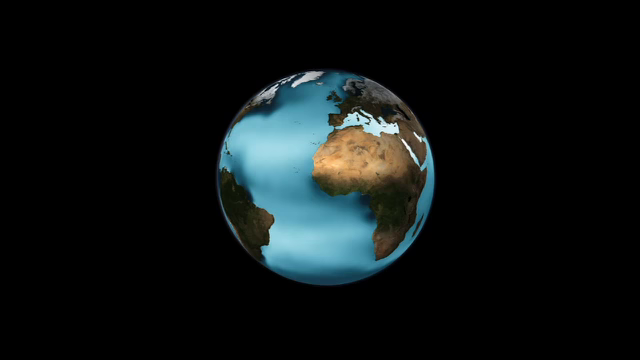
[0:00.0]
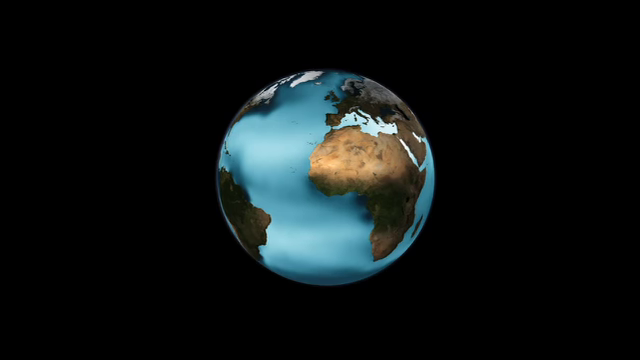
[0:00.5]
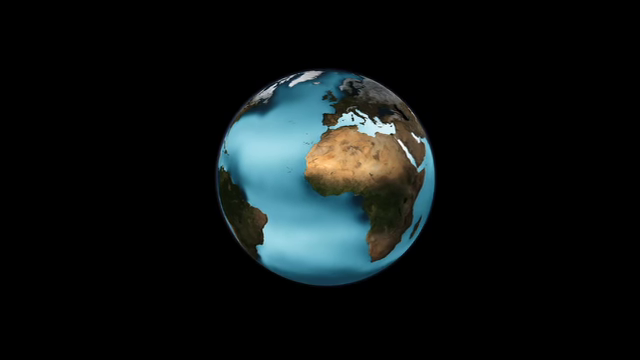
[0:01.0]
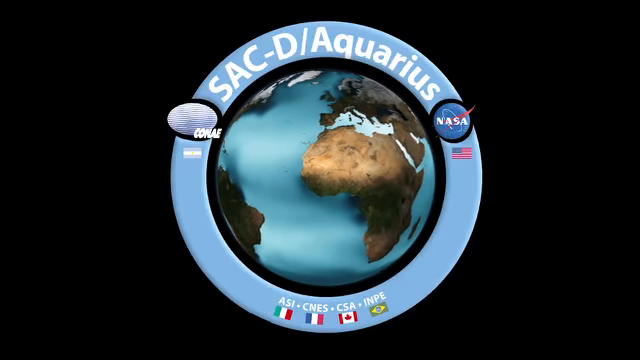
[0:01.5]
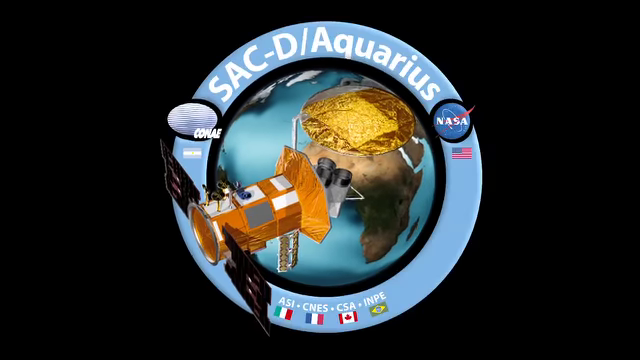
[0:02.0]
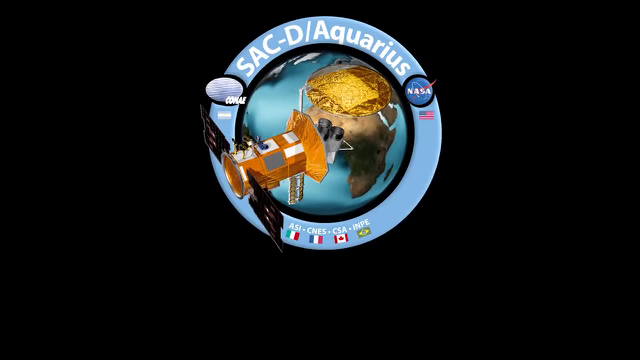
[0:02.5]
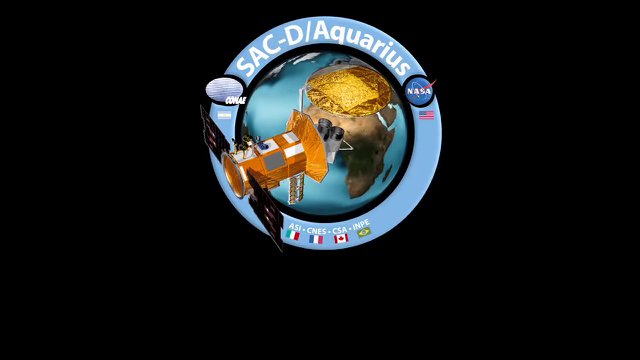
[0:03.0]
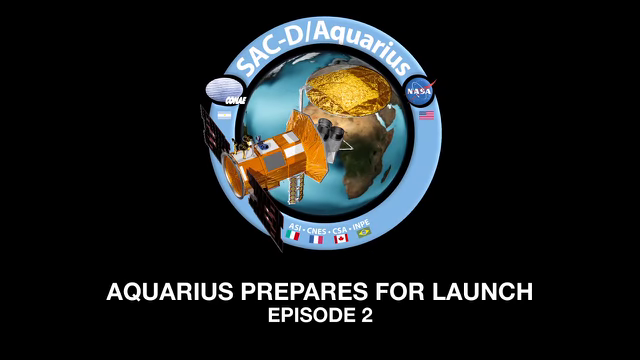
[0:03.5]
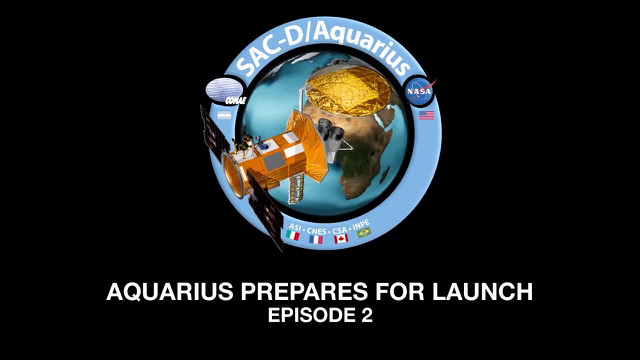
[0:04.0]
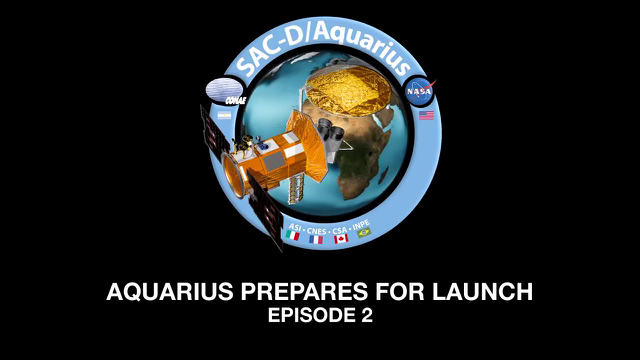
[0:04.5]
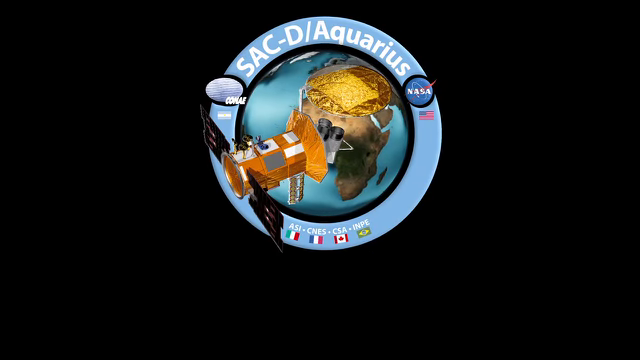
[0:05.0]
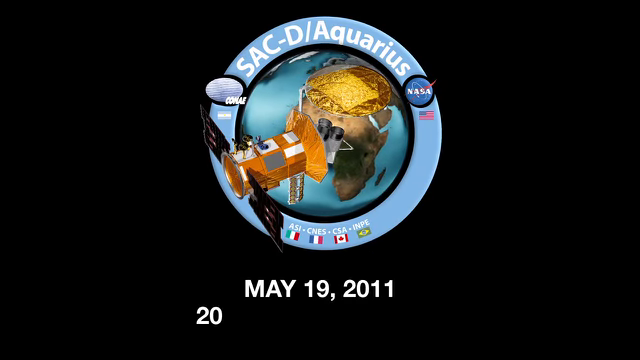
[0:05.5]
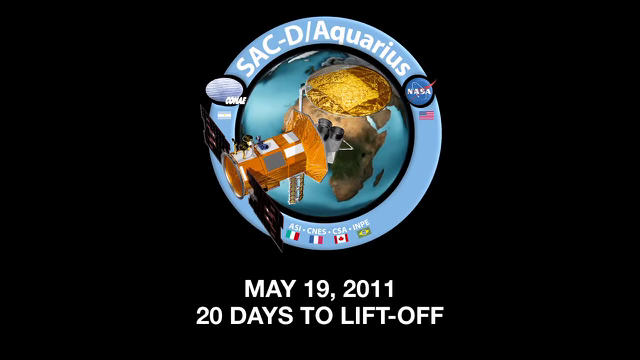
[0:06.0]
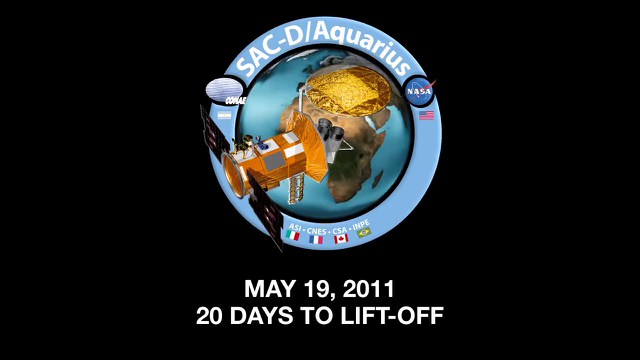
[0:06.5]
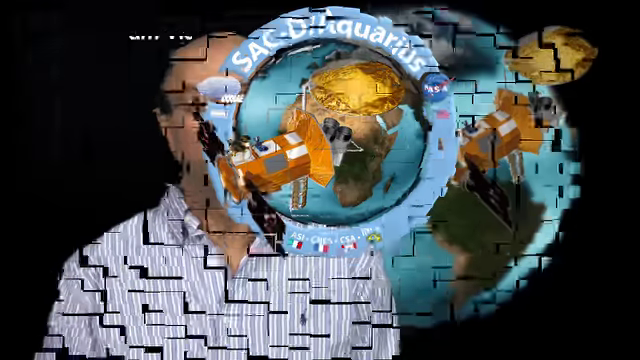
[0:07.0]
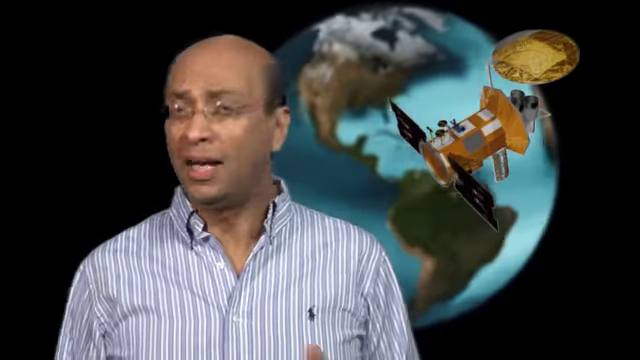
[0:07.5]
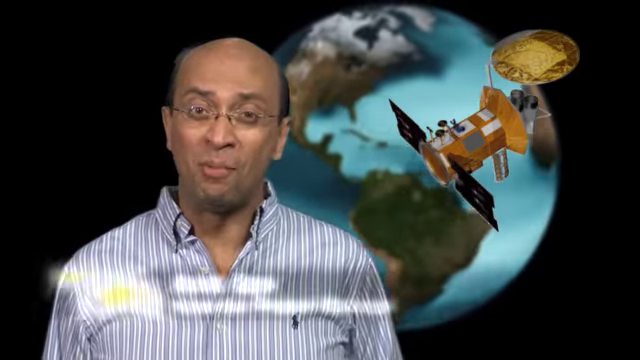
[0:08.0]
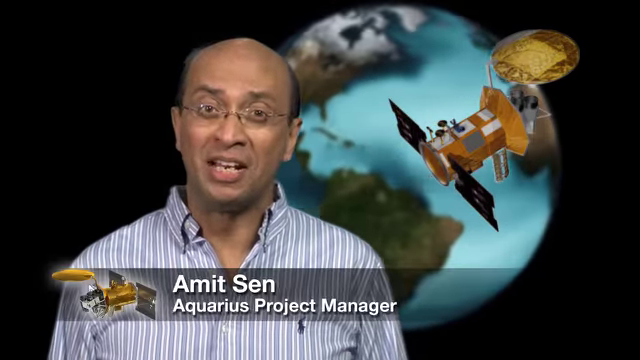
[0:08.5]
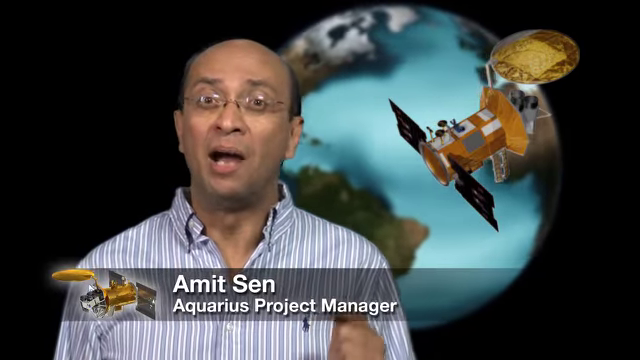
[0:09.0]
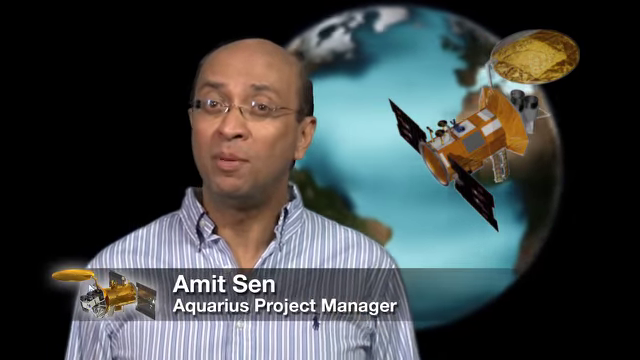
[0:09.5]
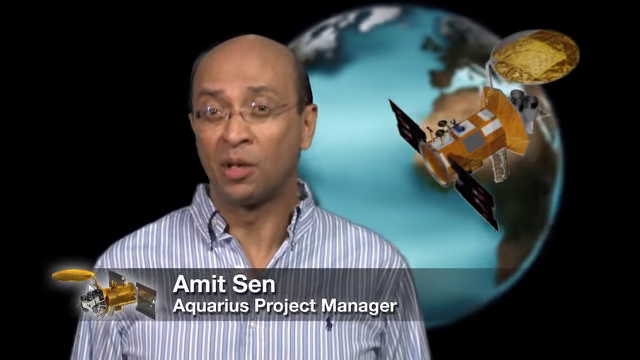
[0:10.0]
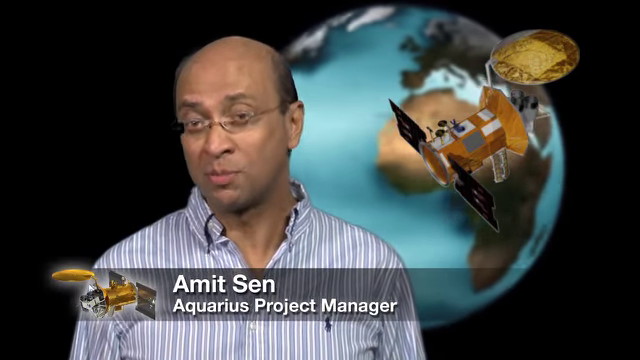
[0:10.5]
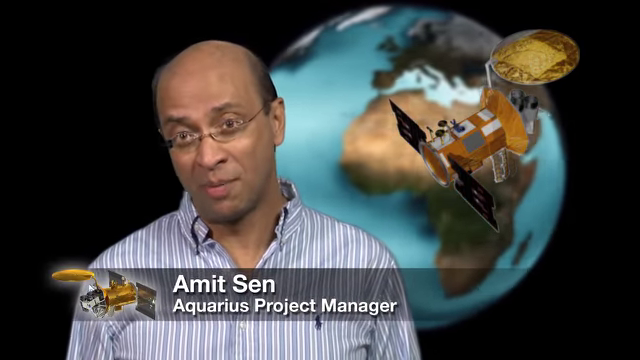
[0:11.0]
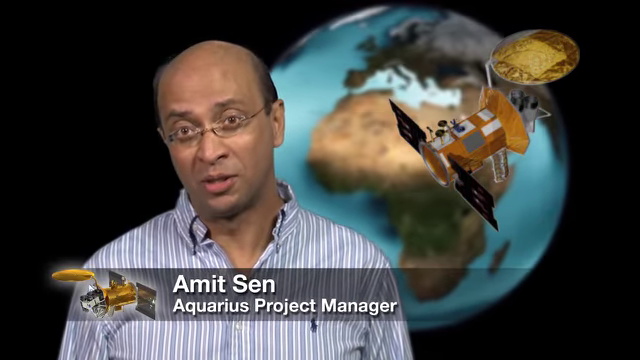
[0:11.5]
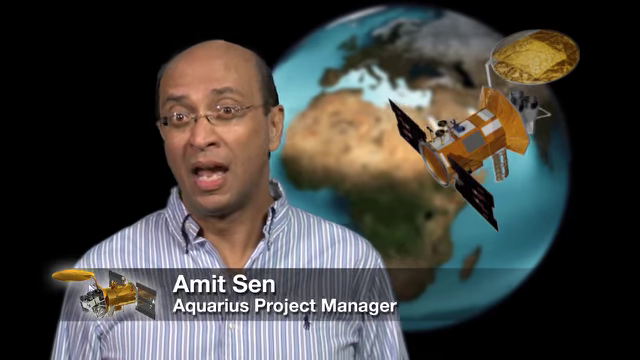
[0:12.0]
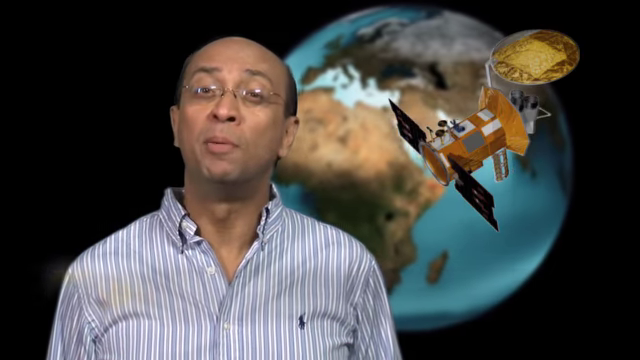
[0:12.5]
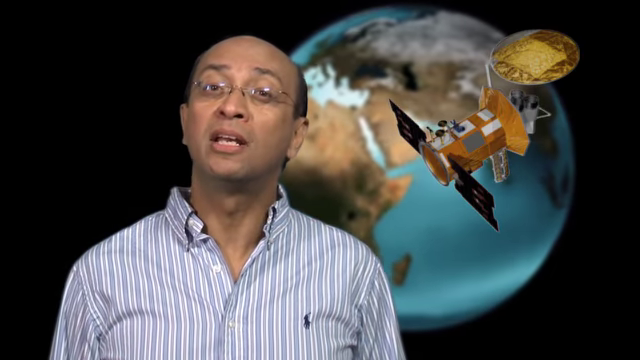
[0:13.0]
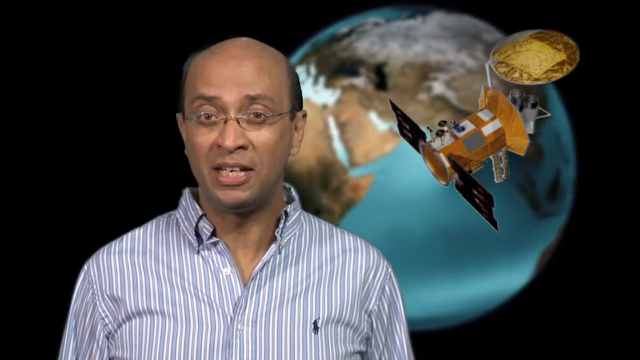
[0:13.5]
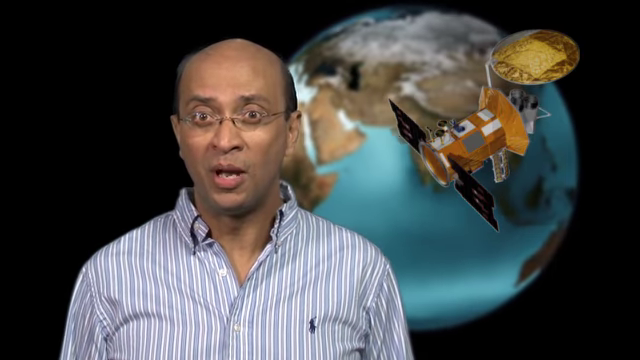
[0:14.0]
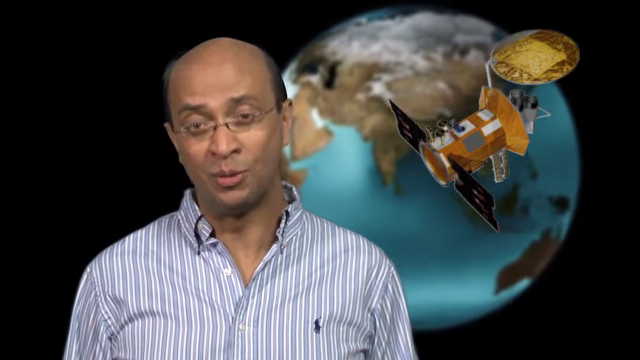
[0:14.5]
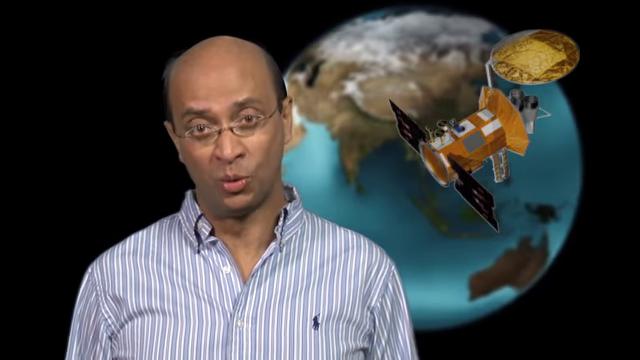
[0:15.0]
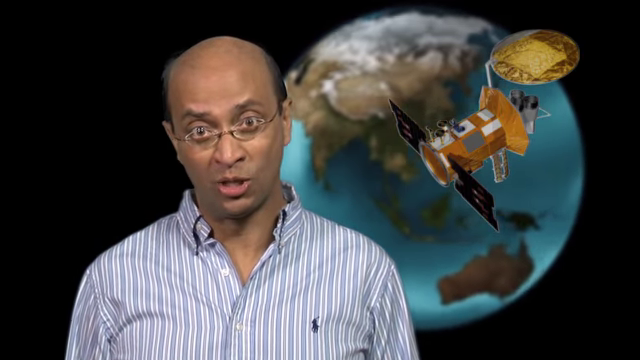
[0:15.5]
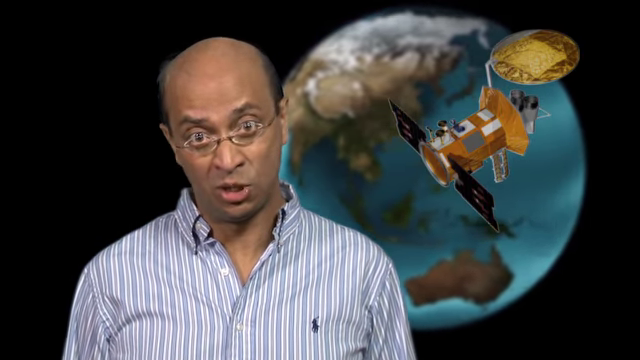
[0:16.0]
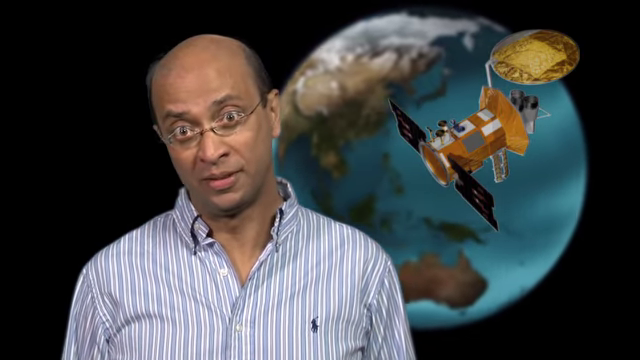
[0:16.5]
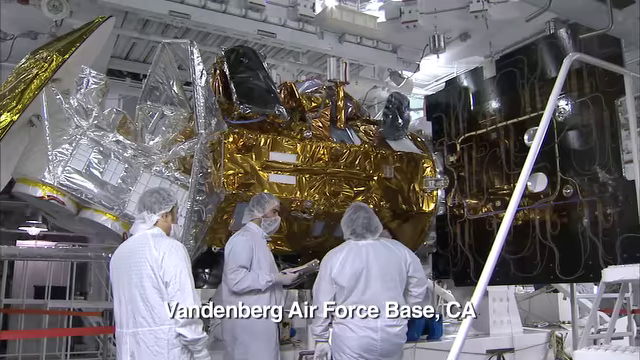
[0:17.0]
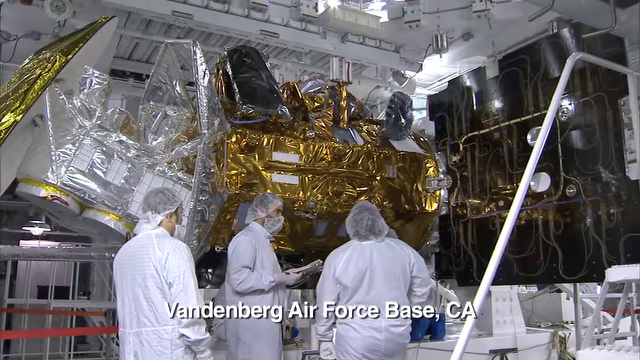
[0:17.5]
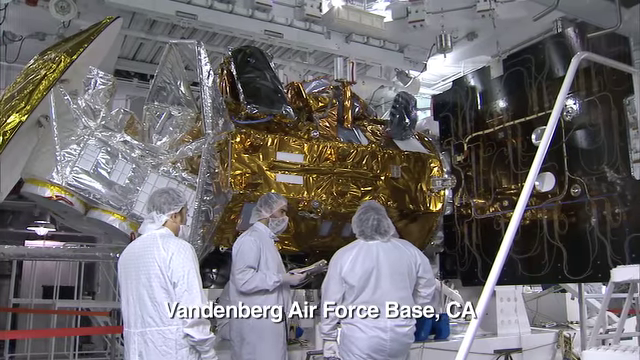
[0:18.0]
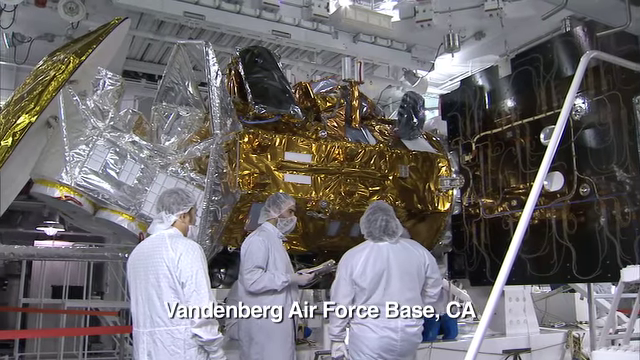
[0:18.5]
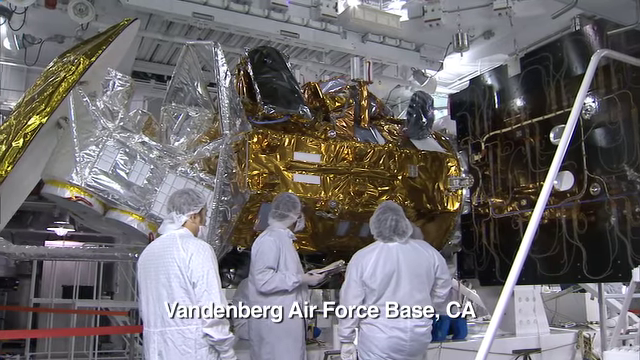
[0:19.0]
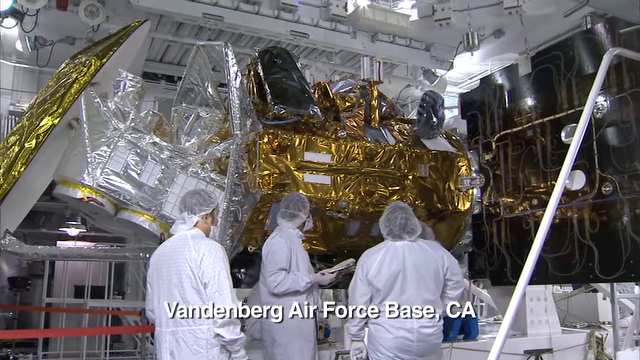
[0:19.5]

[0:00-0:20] A globe of the planet Earth slowly rotates. NASA appears, along with the text "SAC-D Aquarius." There is a United States flag and four other flags; one is Canada, and three other countries are also listed. The text reads "Aquarius prepares for launch episode two." The globe is shown with a big blue circle containing words and information, and a picture of what appears to be Aquarius, which is gold. The date "May 19, 2011" appears along with "20 days to liftoff." Against a black background the globe slowly spins, and Aquarius apparently goes around Earth. A man appears wearing glasses and a vertically striped button-up shirt; he has dark hair, is going bald, and possibly looks Indian. He is identified as Amit Sen, the Aquarius project manager, and he is talking and seems very excited. Aquarius is at Vandenberg Air Force Base, California; it looks like it is wrapped in gold tinfoil and plastic. Three or four workers stand around it, all in white outfits with hairnets, masks and white gloves.